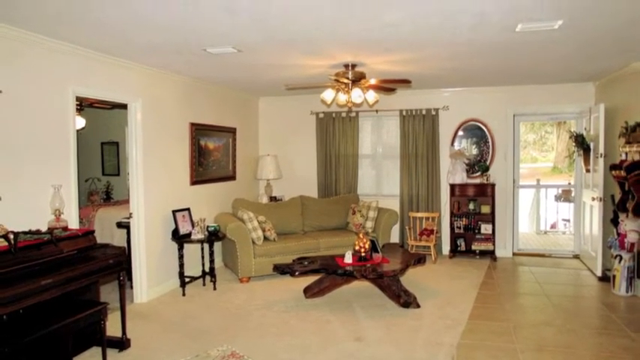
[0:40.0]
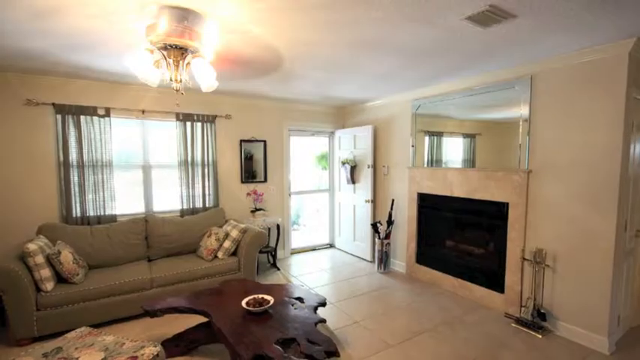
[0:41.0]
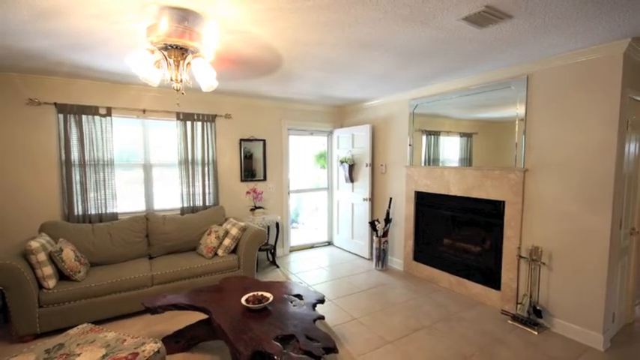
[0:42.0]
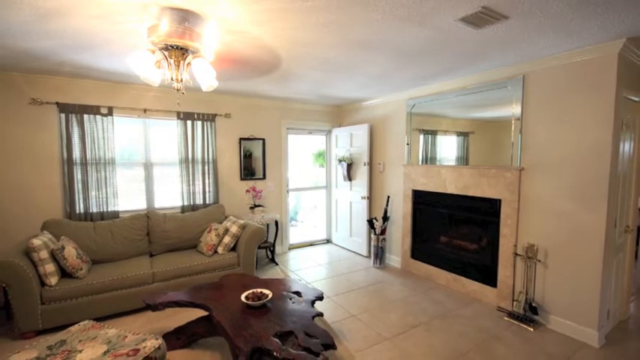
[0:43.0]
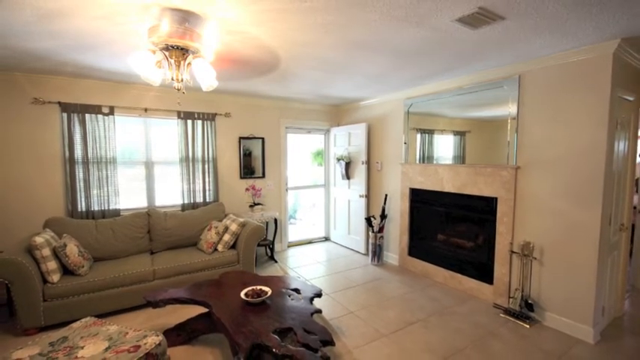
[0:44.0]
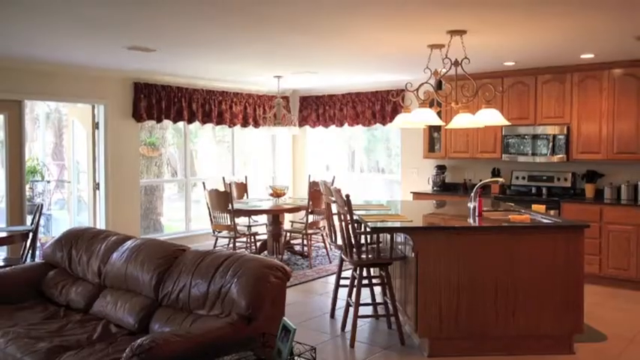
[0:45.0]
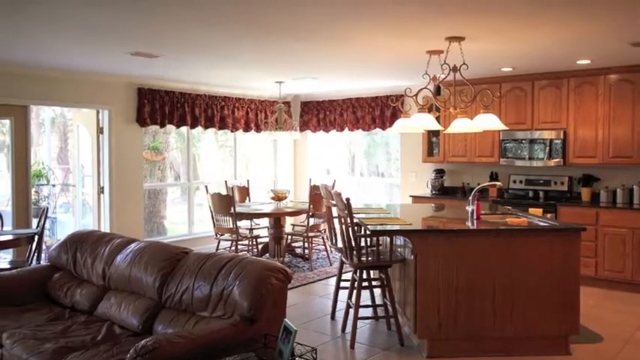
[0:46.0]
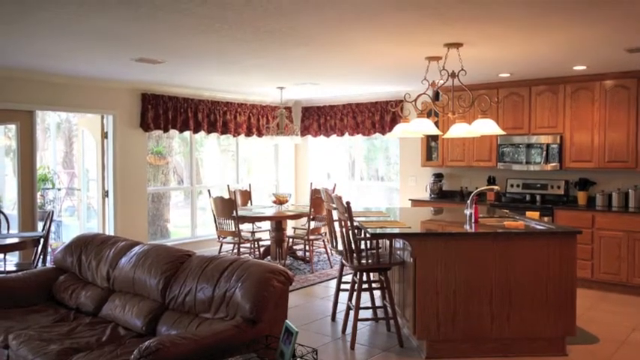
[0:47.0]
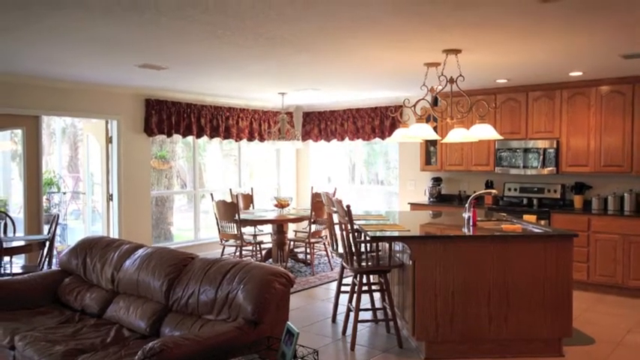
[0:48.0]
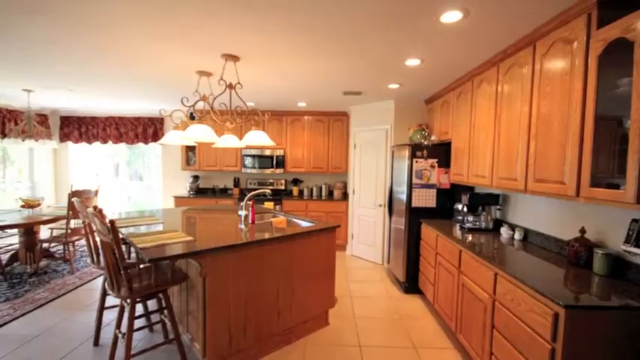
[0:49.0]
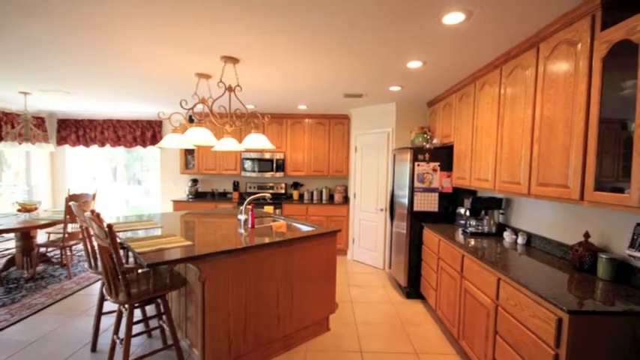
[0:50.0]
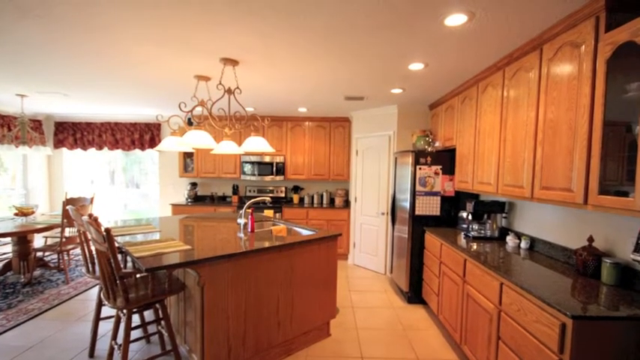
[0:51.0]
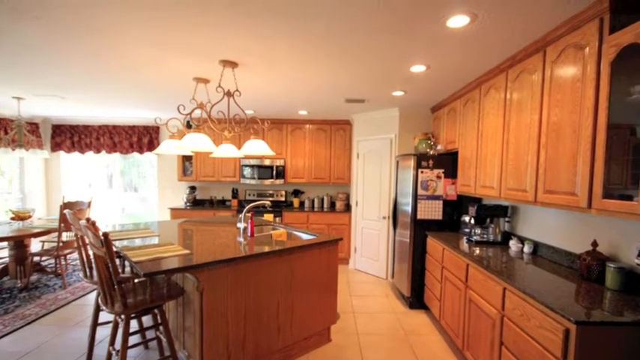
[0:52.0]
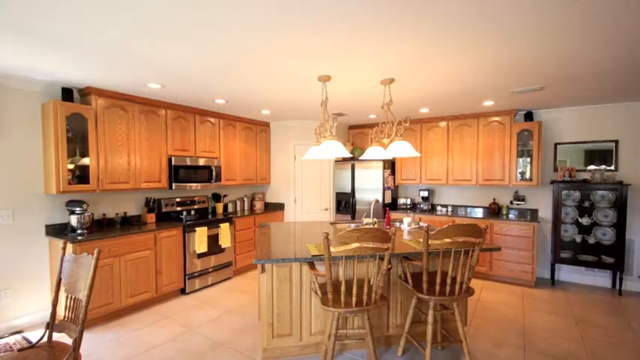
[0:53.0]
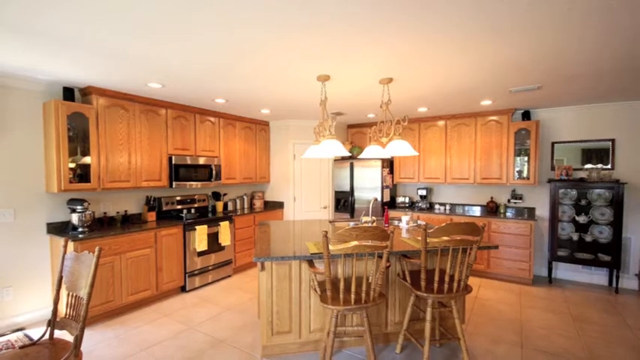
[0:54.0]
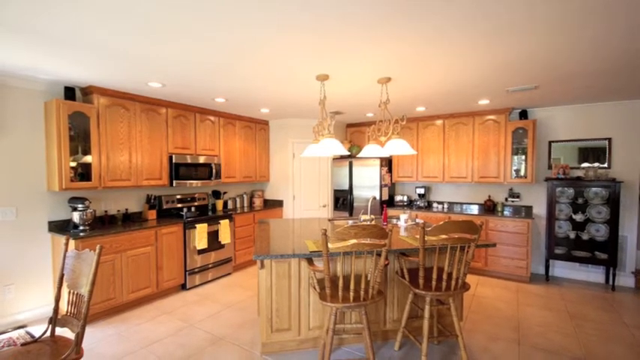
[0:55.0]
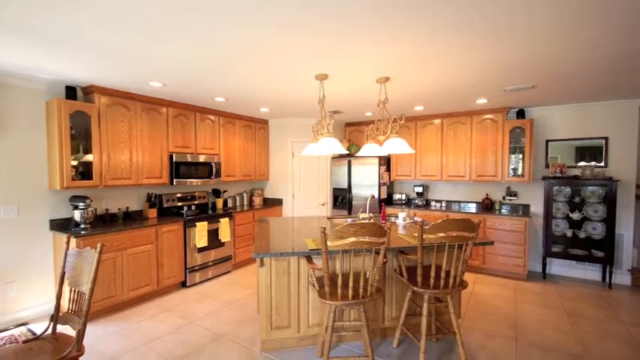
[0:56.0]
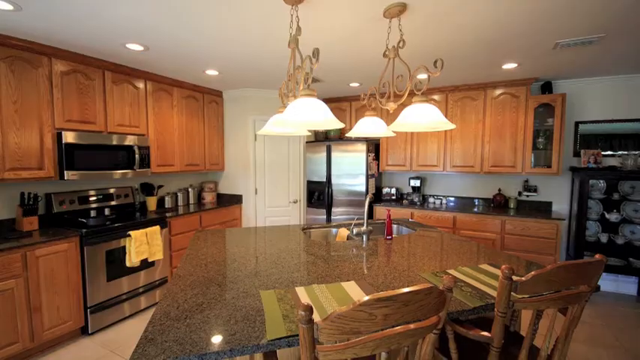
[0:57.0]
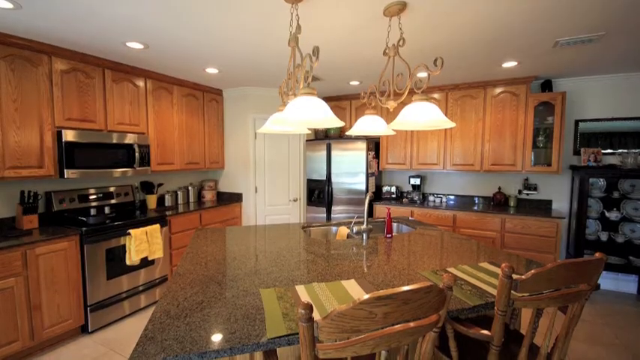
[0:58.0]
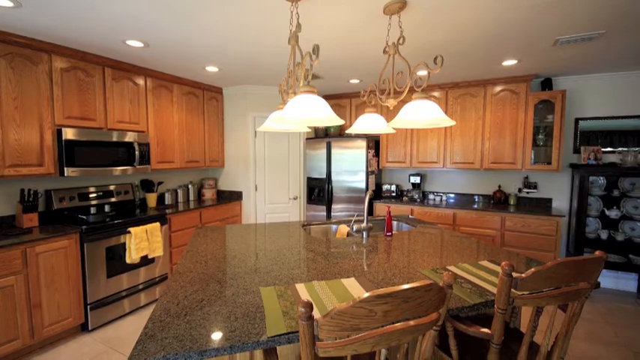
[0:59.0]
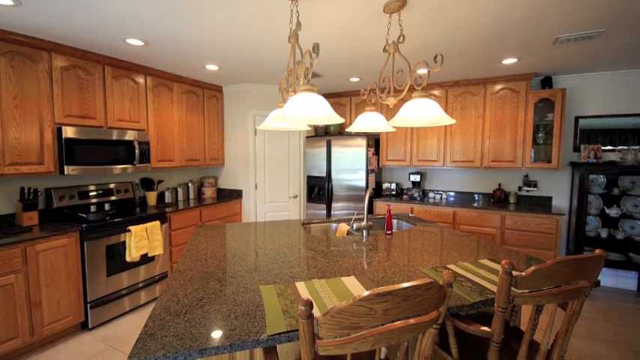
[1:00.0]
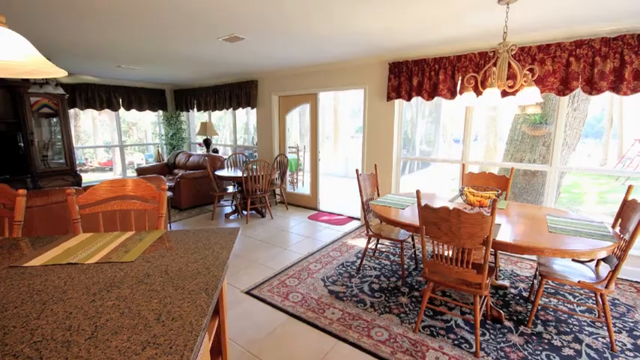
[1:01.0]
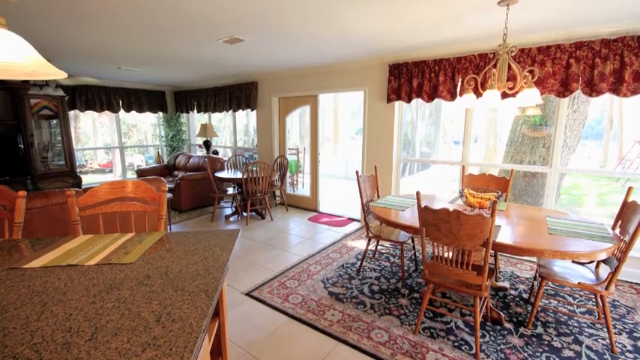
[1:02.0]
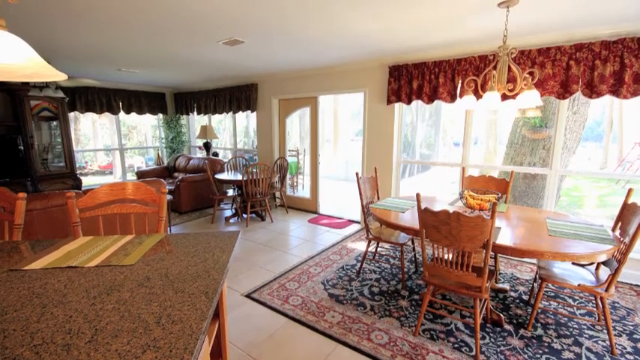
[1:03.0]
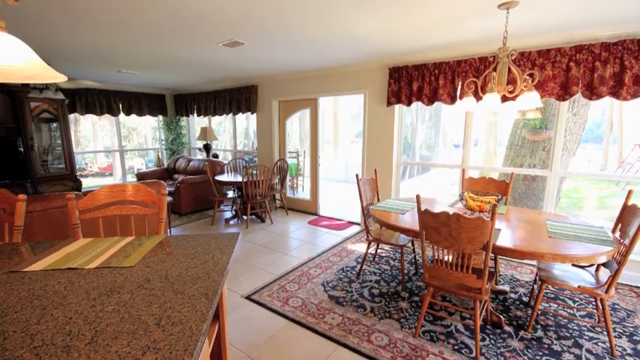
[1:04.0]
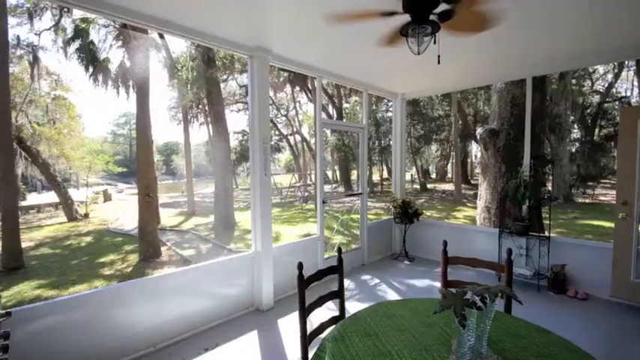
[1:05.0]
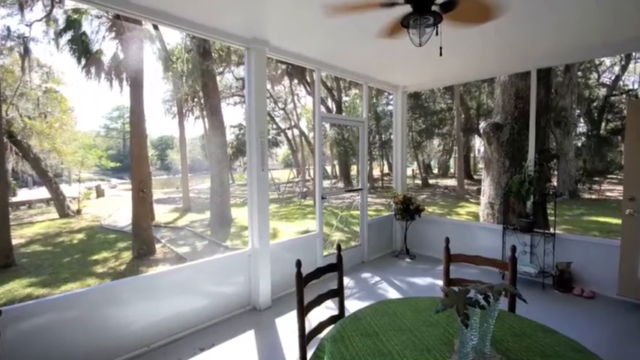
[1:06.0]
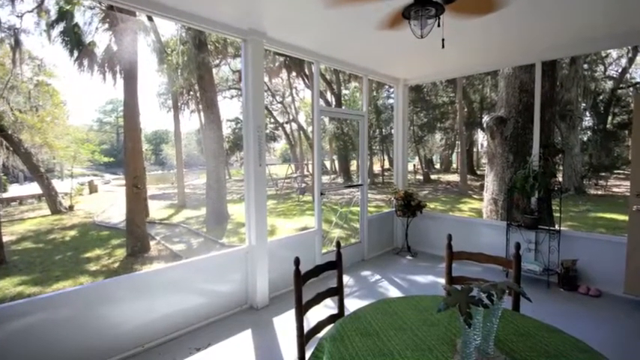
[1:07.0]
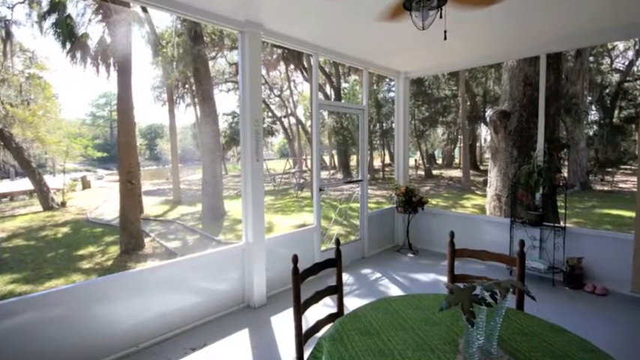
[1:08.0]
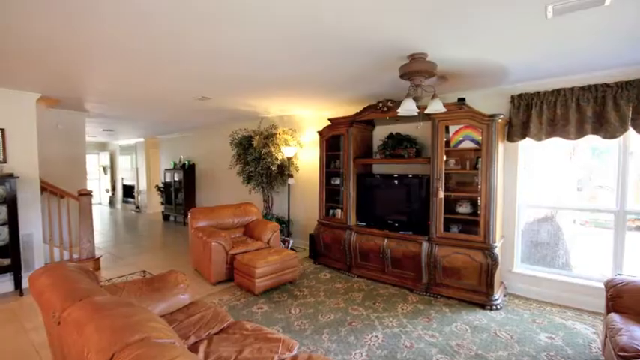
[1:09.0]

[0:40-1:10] In the lounge, the door out onto the porch is on the right, with a mirror on the inside of the door and some sort of display cabinet below it. To the left of that, a window has olive green curtains hanging from above the window to floor level, matching the sofa in the corner just left of centre. In front of that sofa is a large wooden coffee table that may have been carved from a single piece of wood. There is a painting on the wall and a lamp on a table behind the sofa. On the left side of the image are another doorway to another room and a piano. Another view follows, possibly of another premises: a living room with a similar coffee table but a different sofa, a fireplace, and a mirror and table that are not the same as before. The view then moves to a kitchen and living area with large leather sofas. Another view shows a kitchen with marble worktops and cupboard and drawer fronts possibly in a colonial design, lights over the island, and plenty of seating for meals. Several angles of this kitchen and living area are shown. Next comes what looks like some sort of conservatory, with lots of glass, views out, and another table with seating; the landscaped gardens are visible outside. Then there is another very large living area with a large wooden dresser and leather sofas with a leather footstool.